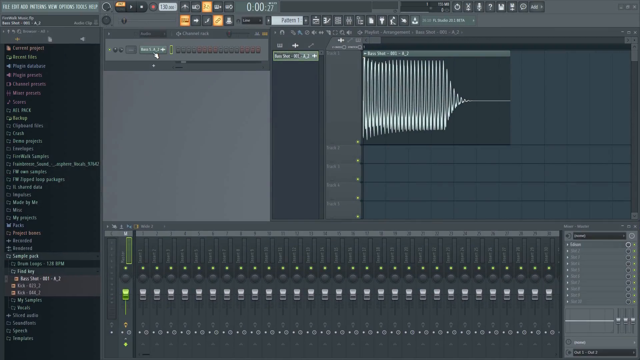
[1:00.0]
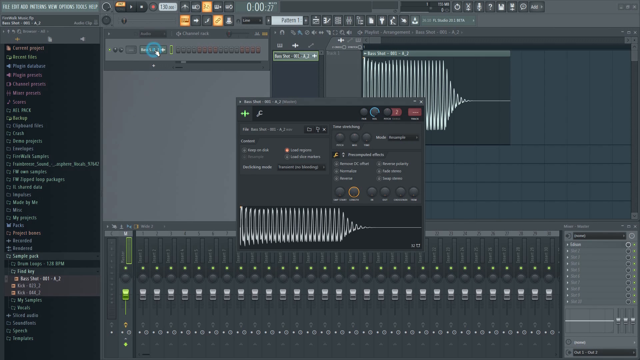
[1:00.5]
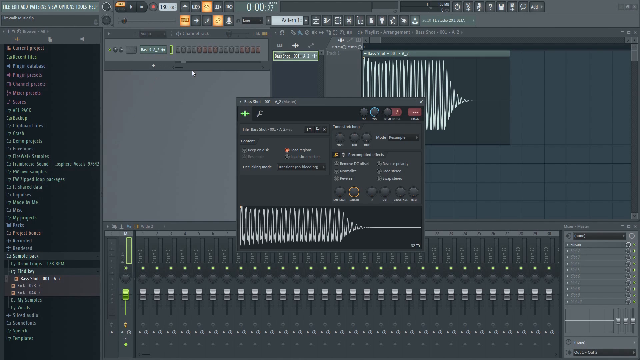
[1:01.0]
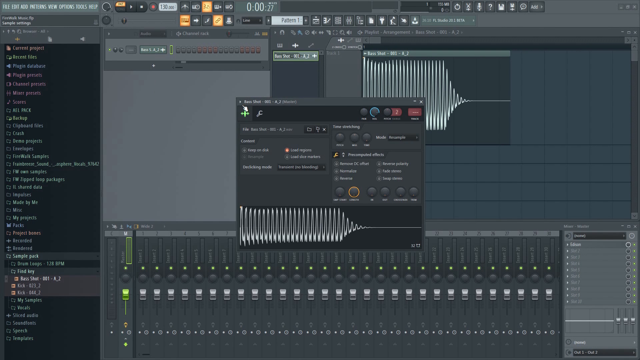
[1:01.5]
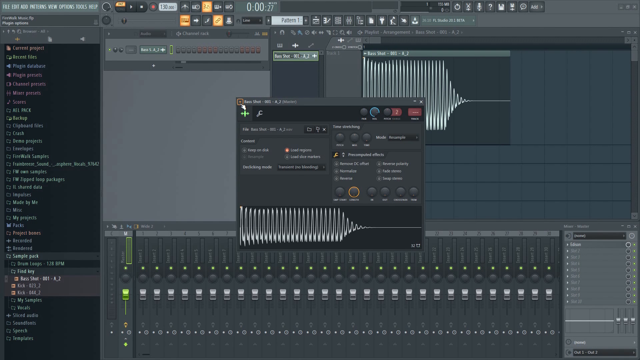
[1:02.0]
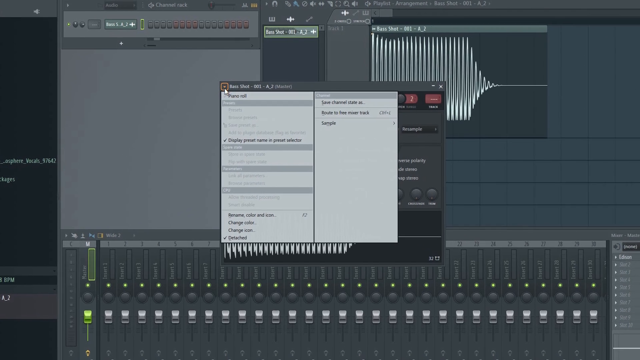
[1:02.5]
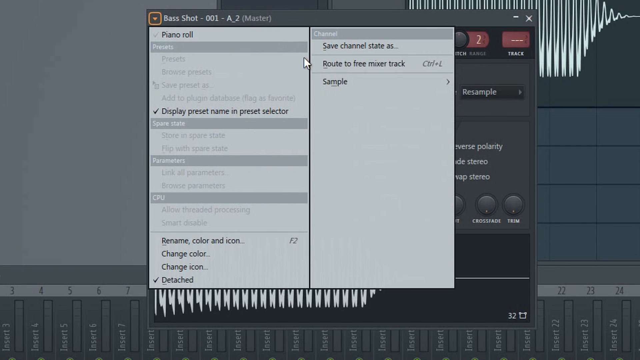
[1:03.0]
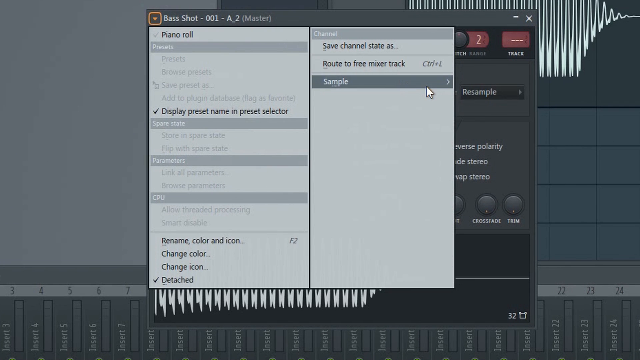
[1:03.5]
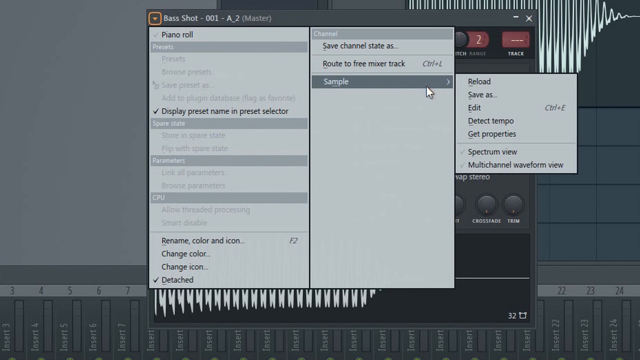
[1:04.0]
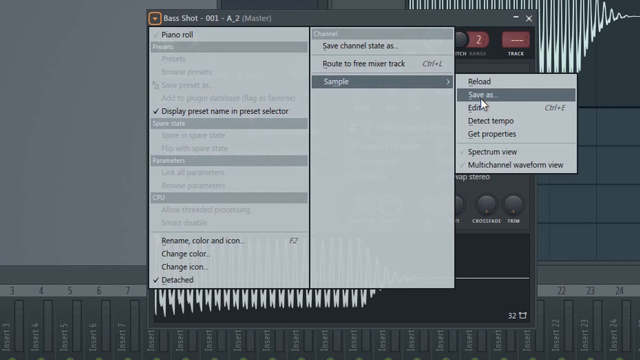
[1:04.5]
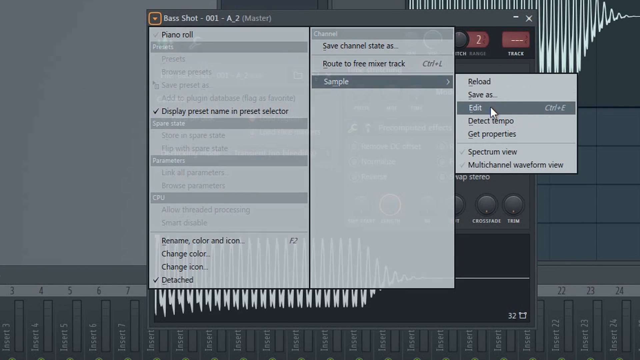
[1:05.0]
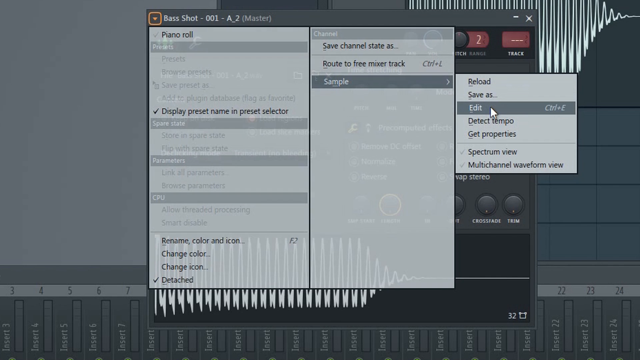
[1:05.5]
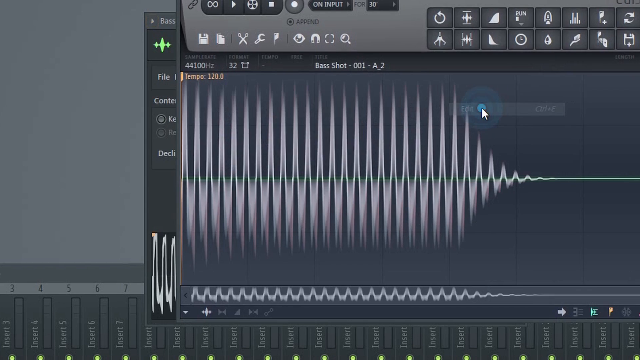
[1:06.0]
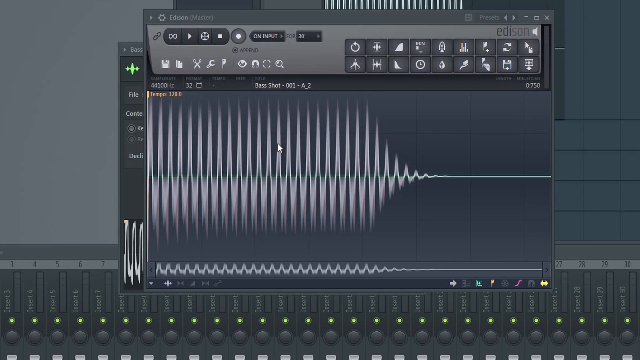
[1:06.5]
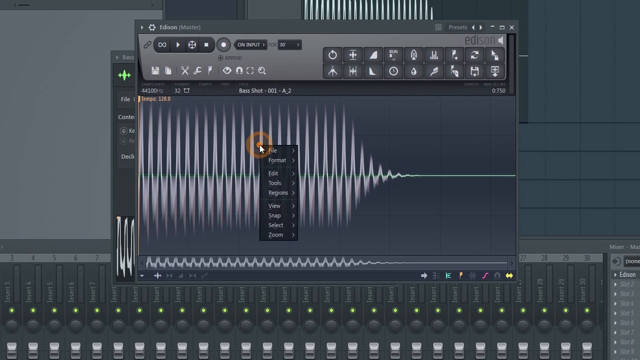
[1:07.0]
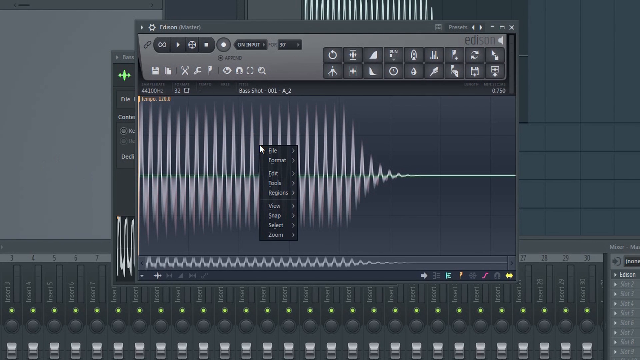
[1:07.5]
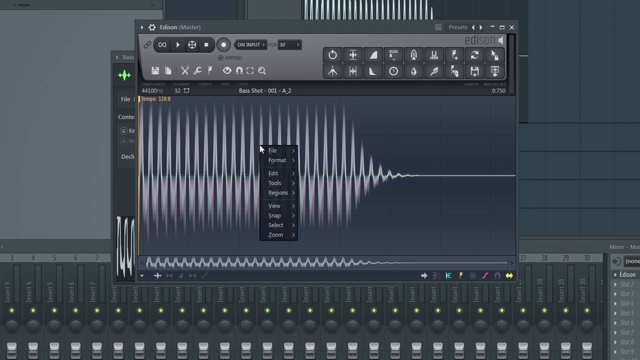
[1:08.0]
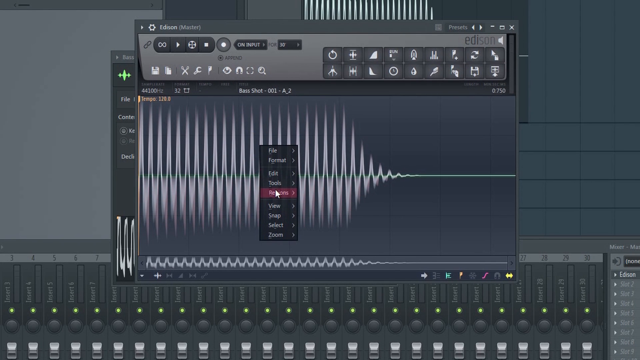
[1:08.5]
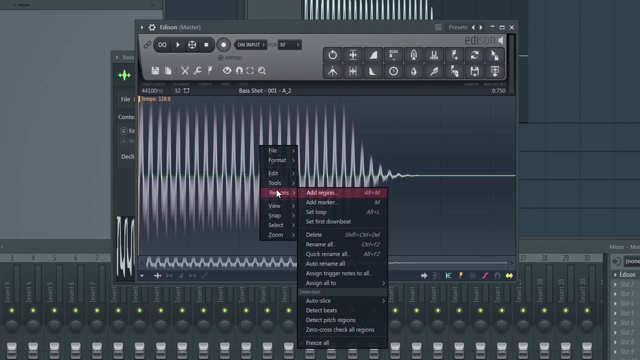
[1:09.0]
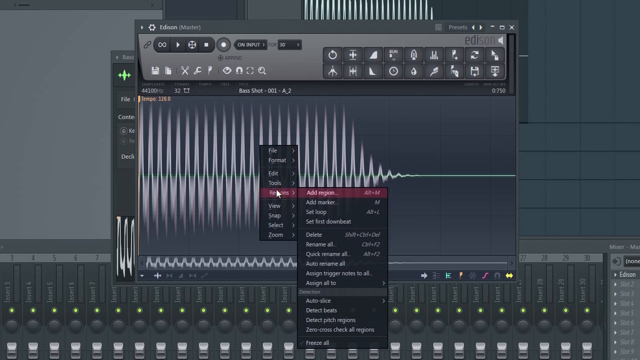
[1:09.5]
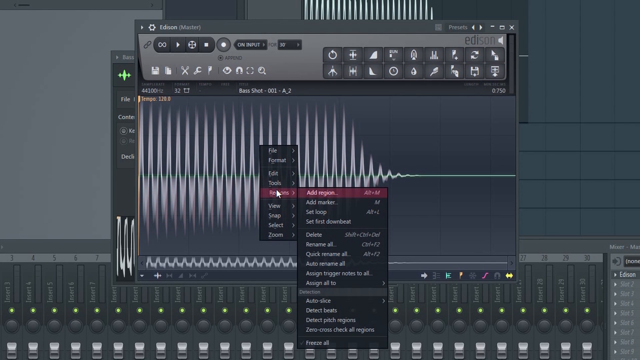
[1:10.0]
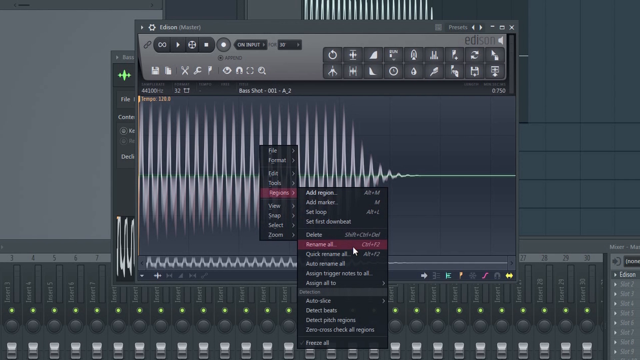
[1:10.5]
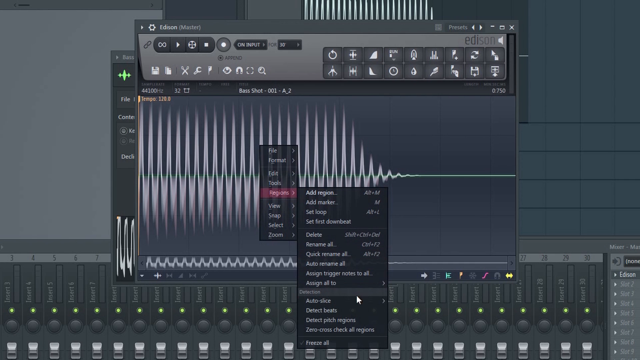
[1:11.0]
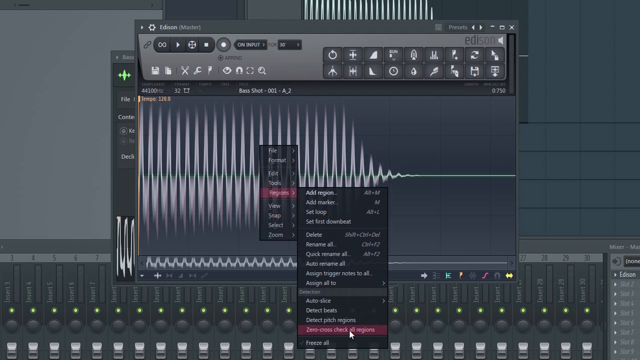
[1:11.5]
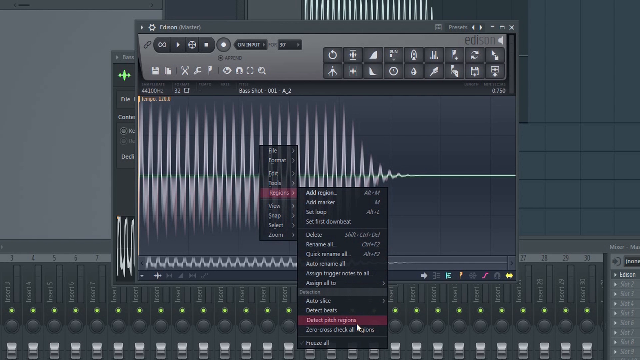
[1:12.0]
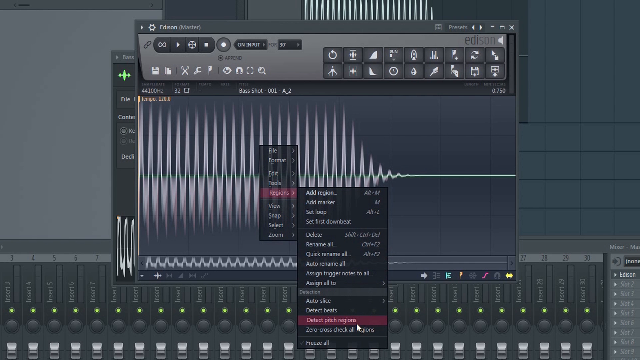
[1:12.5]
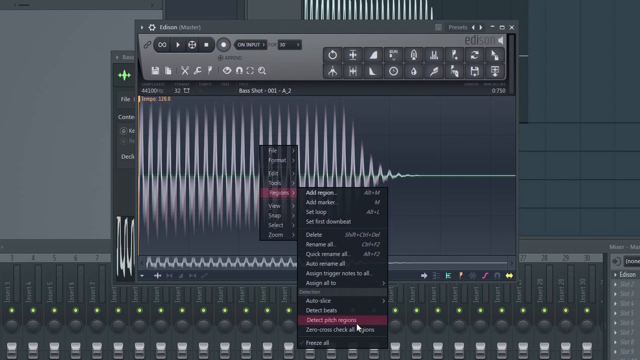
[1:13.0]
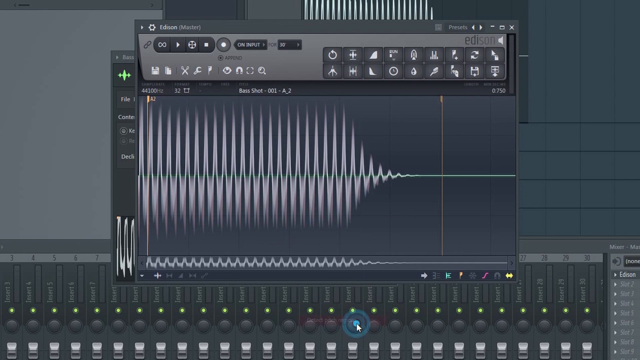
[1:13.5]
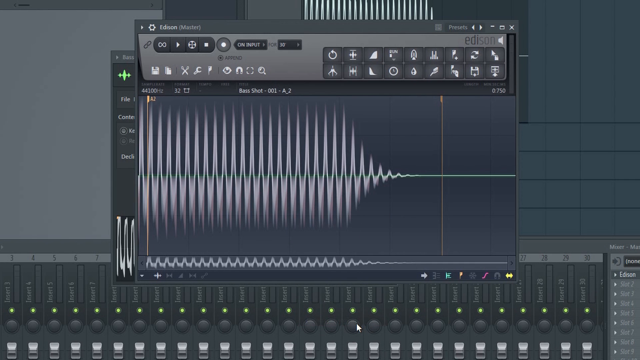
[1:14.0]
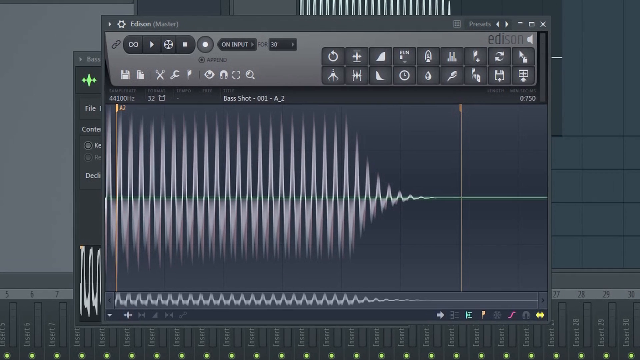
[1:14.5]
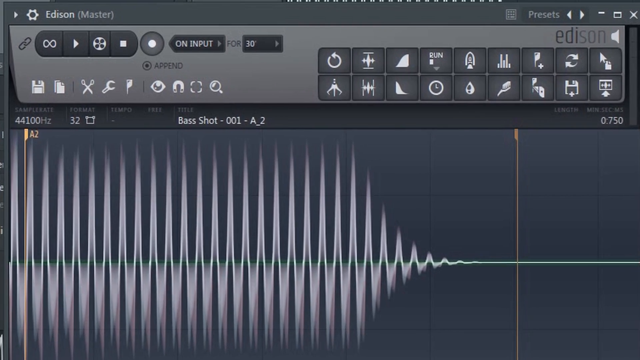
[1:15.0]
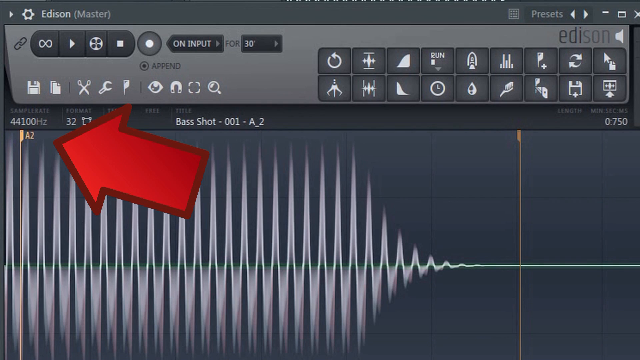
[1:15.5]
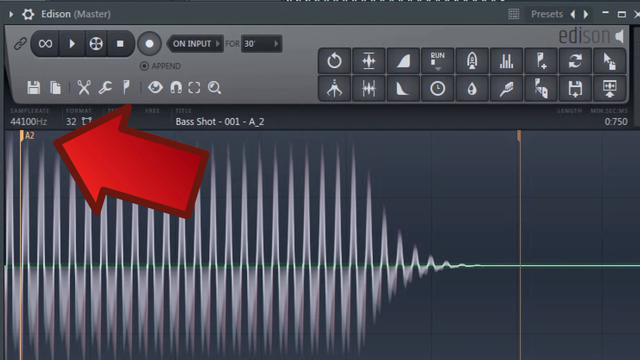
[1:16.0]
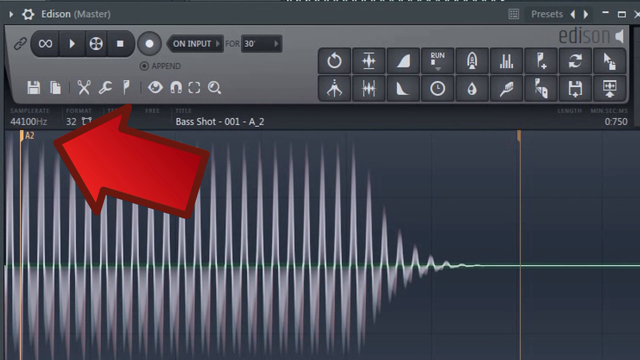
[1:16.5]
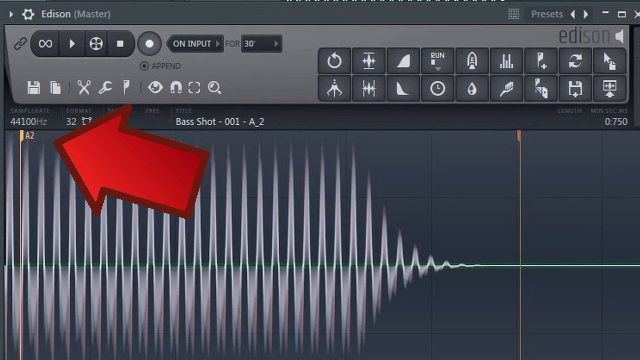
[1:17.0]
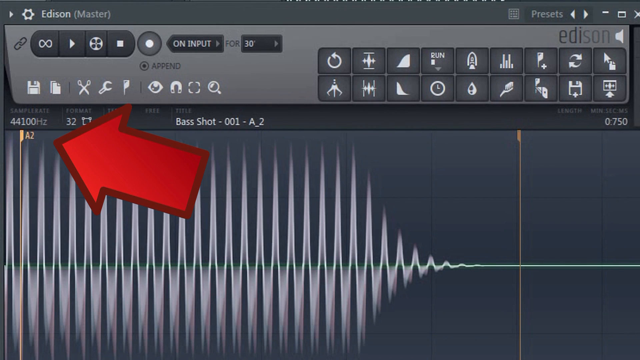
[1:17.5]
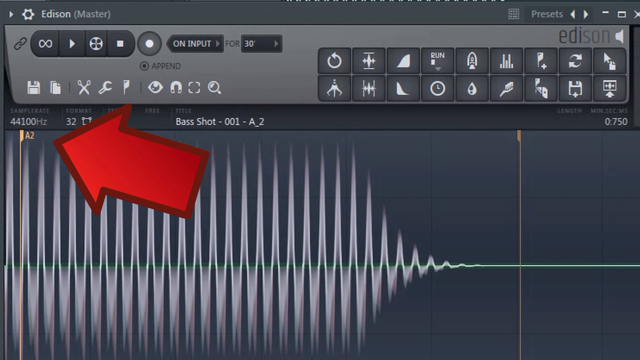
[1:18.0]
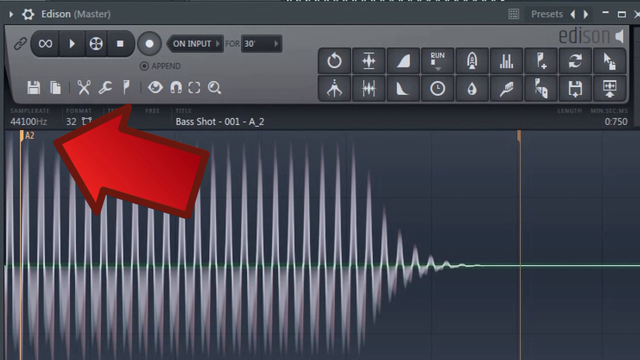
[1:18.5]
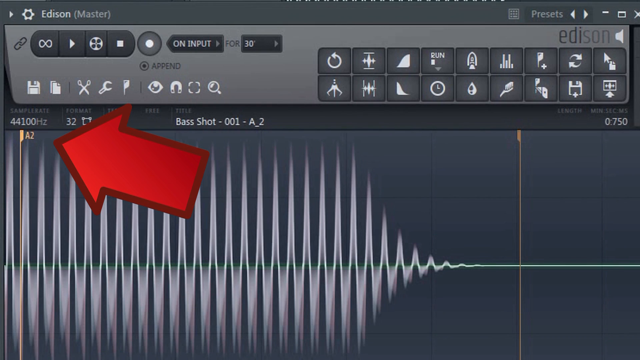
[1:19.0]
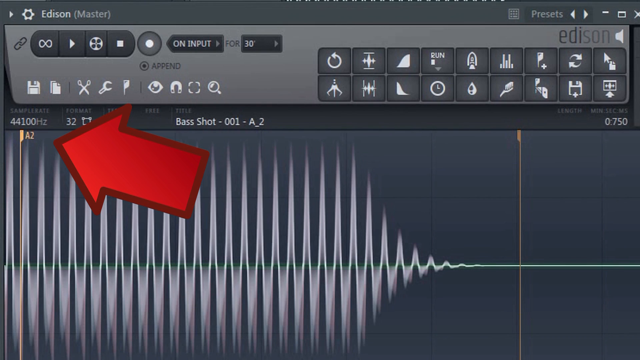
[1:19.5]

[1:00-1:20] A software program, presumably on someone's computer, is shown in gray and dark gray. At the top right of the screen is a waveform in a mini window. On the far left is a menu of many different items, but the text is too small and blurry to read. When the user clicks something, a mini window pops up with a waveform at the bottom; its text is also unreadable. The user clicks something at the top left corner of the mini window, opening a menu with black text reading "Piano Row," "Display Preset Name and Preset Selector," "Rename Color and Icon" and "Change Color," followed by an unclear item that says "Change" something, possibly "Change Icon," and below that "Detached." To the right, another window attached to the previous menu reads "Save Channel State As." Slightly blurry white text apparently reads "Route to Free Mixture Track," with "Control-L" next to that option, and below it black text reads "Sample."